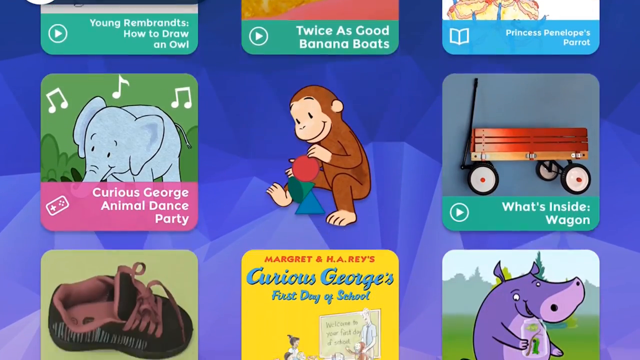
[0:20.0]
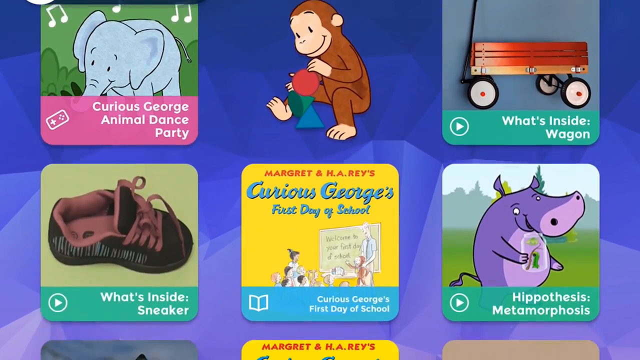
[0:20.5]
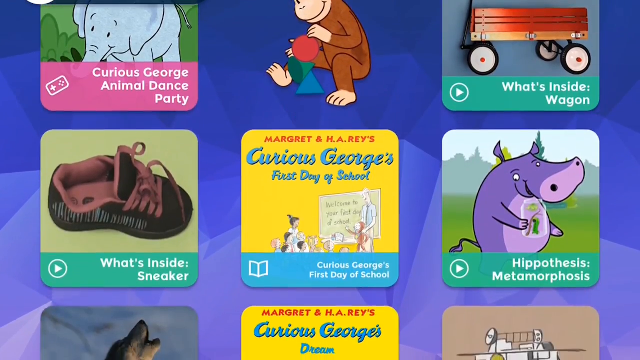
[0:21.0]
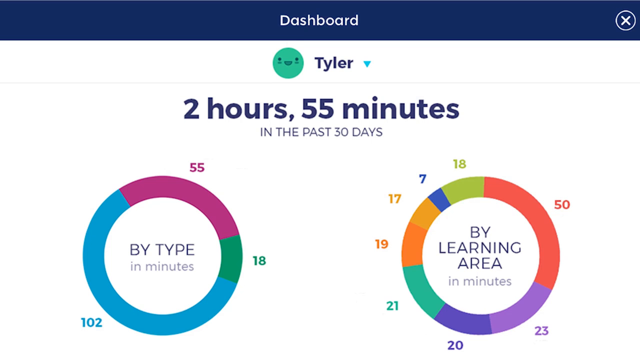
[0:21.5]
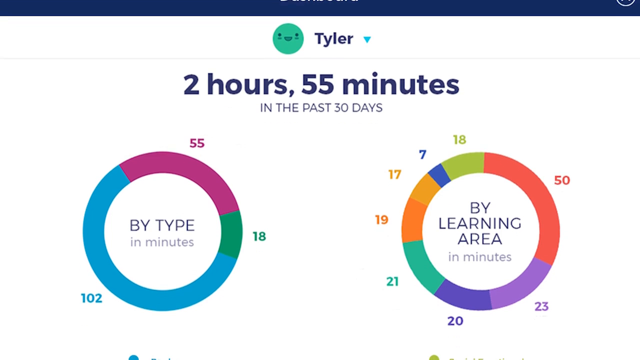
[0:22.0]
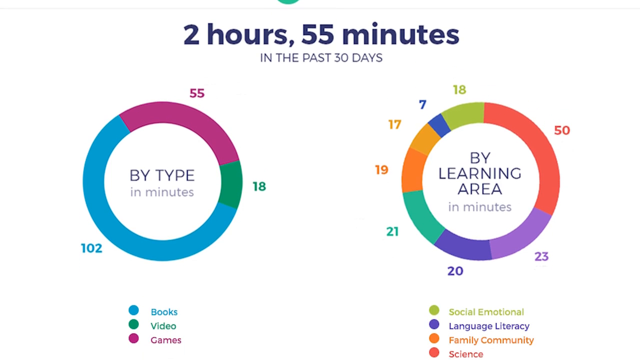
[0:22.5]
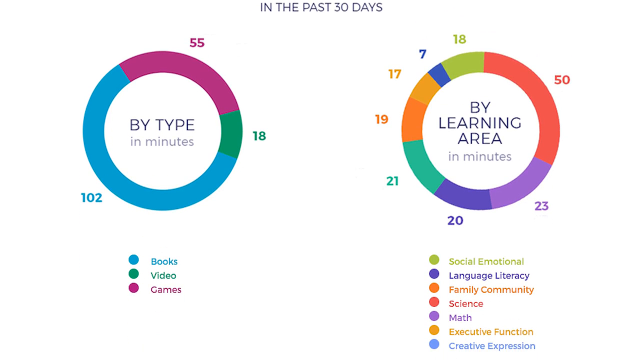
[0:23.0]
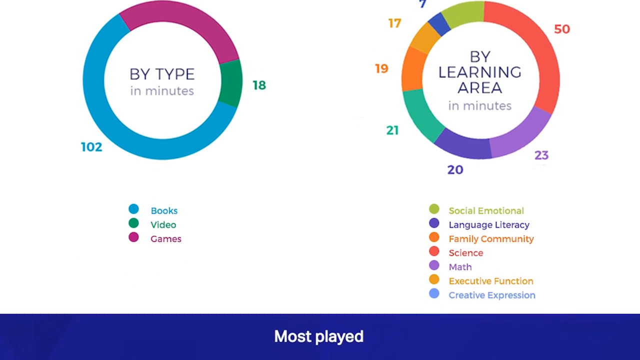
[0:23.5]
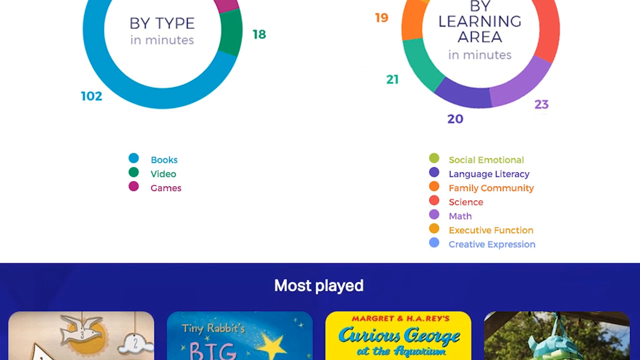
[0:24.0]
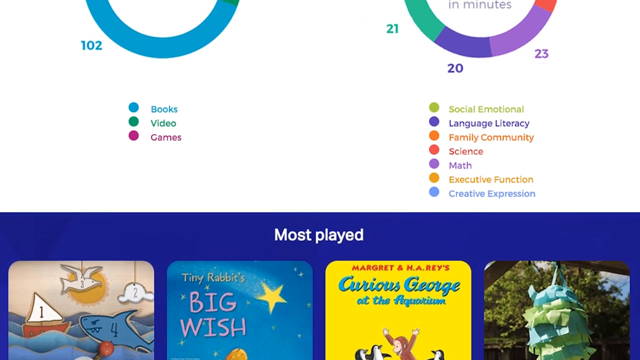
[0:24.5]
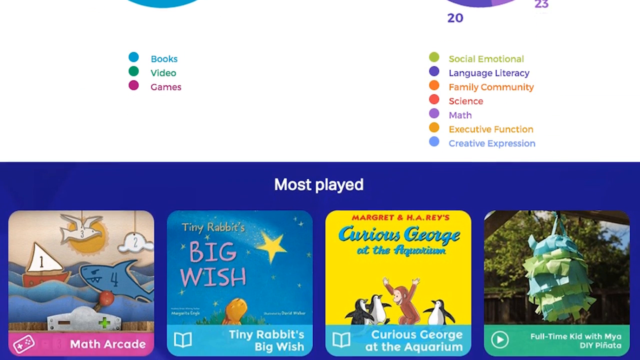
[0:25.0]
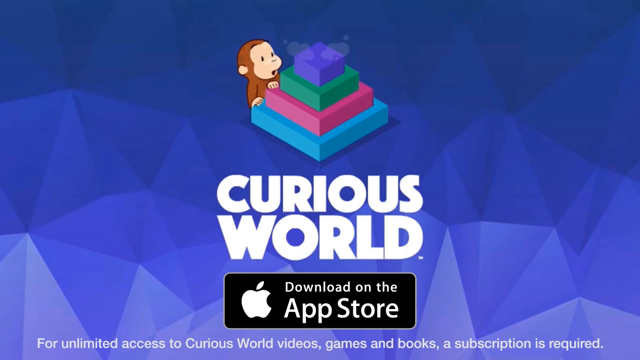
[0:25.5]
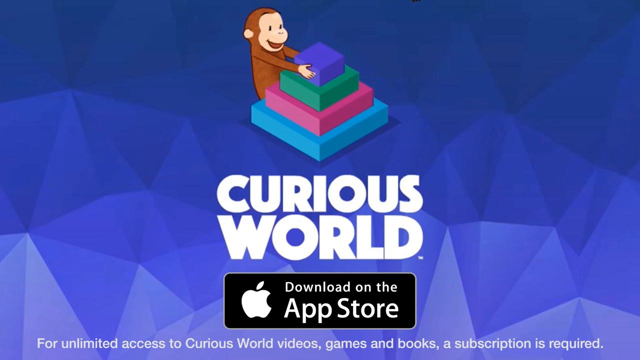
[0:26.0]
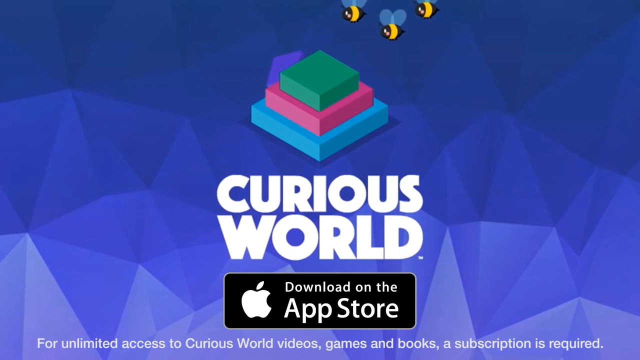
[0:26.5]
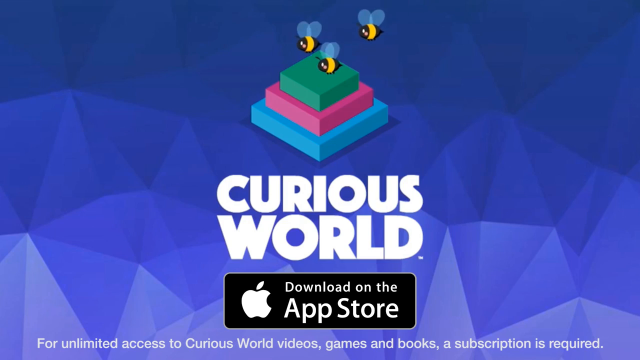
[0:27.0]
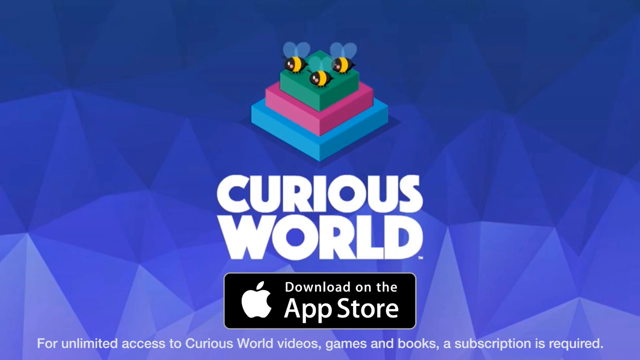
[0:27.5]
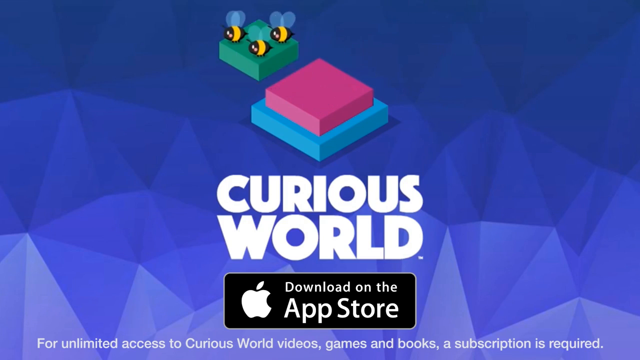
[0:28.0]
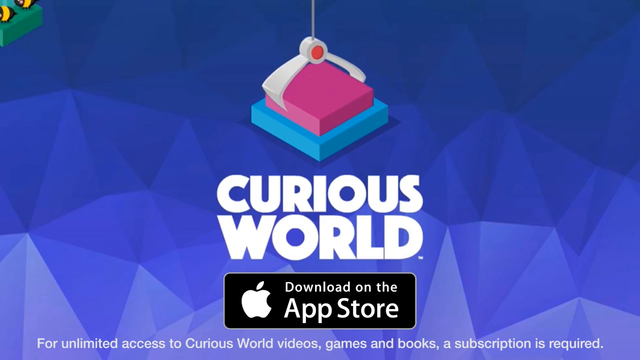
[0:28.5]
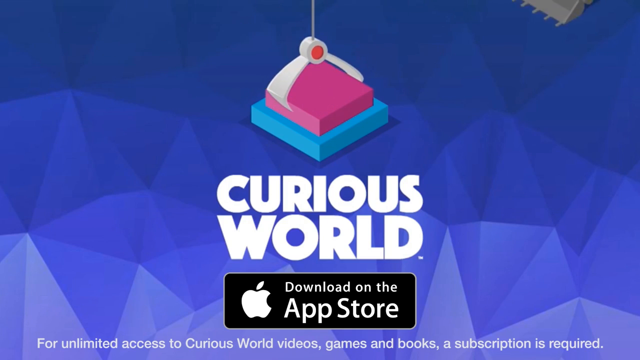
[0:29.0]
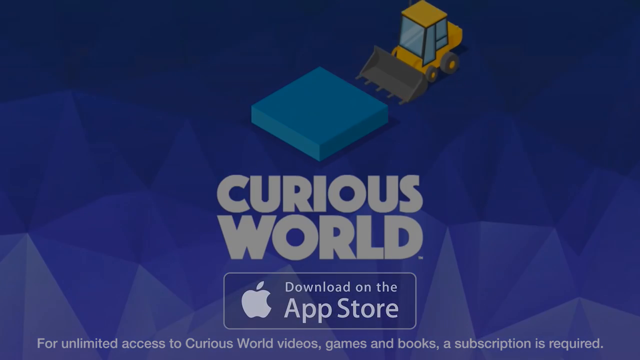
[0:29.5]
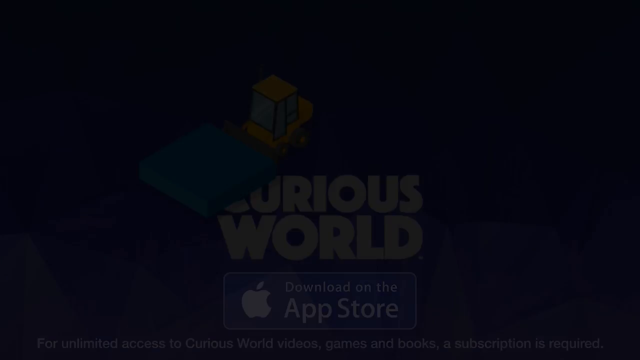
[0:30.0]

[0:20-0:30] Among the TV shows is a scene from the Curious George animal dance party, in which a monkey holds a red balloon and seems to be playing with it. Other shows include "what's inside the wagon" with a photo of a wagon, "what's inside the sneaker" with a foot in a sneaker on top of it, George's first day in school, and the hypothesis. The next page is labeled "Tyler 2 hours 55 minutes in the past 30 days." The first graph is a circle divided into three parts: purple labeled 55, blue labeled 102, and green labeled 18, with "by type in minute" written inside the circle. On the other side is another circle divided into several parts: red labeled 50, purple labeled 23, blue labeled 20, green labeled 21, orange labeled 19, brown labeled 17, light blue labeled 7, and red labeled 18, marked "by the learning area in minutes." In the left circle, blue represents books, green represents videos, and purple represents games. In the lower right, green represents socio-emotional and language literacy, orange represents family and community, red represents science, blue represents math, brown represents executive function, and light blue represents creativity session. On the next page, a monkey stands by building blocks as three bees come over, labeled "curious world" and "download on apple store."